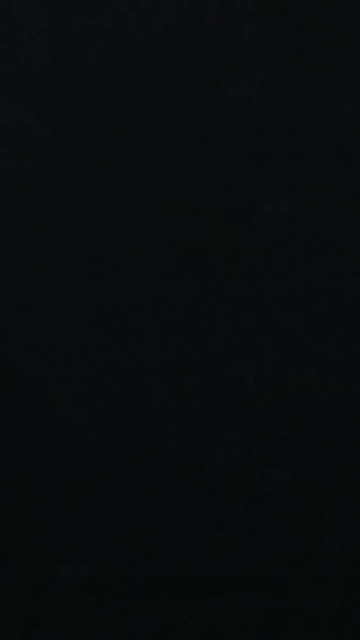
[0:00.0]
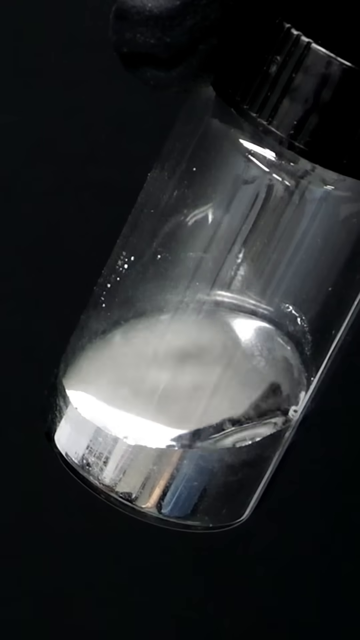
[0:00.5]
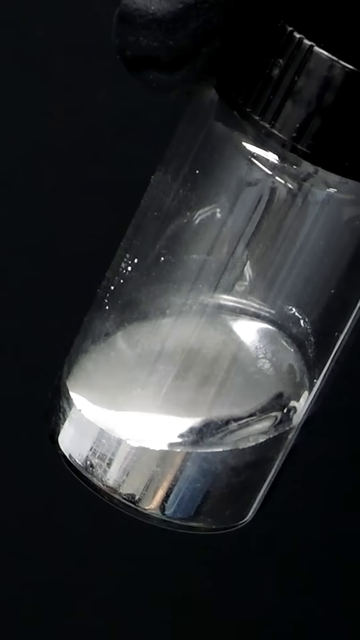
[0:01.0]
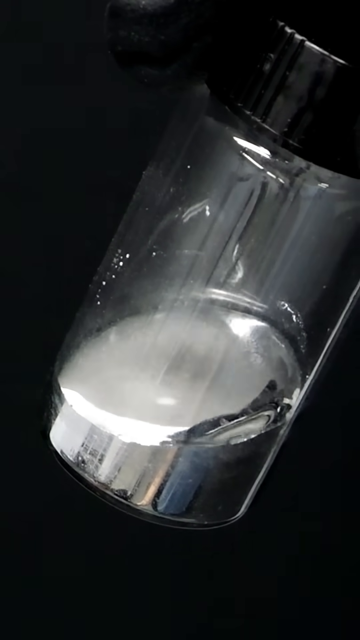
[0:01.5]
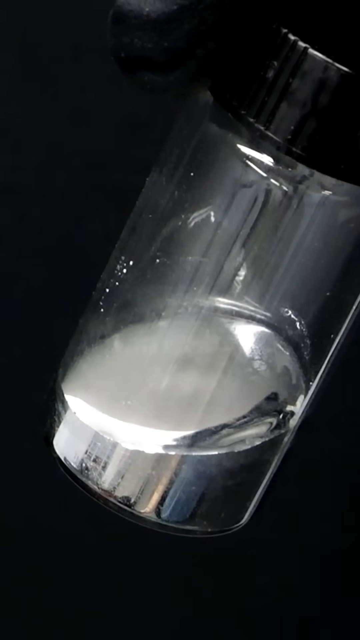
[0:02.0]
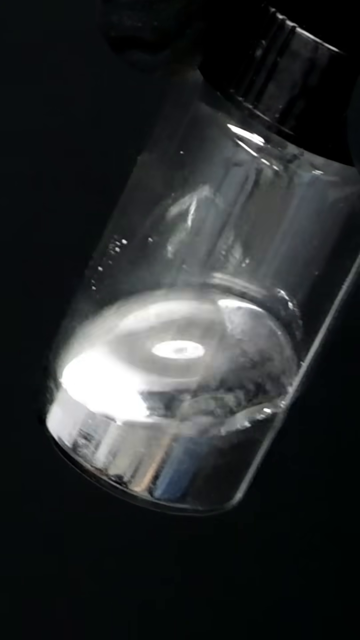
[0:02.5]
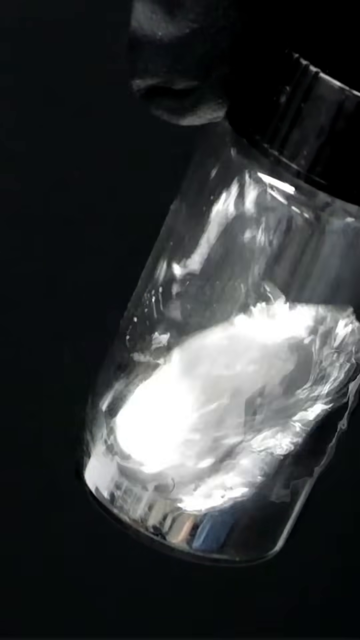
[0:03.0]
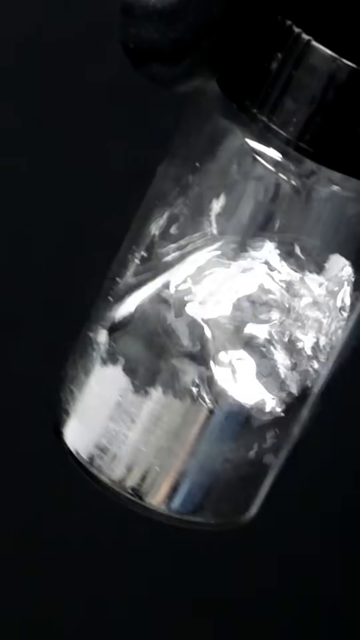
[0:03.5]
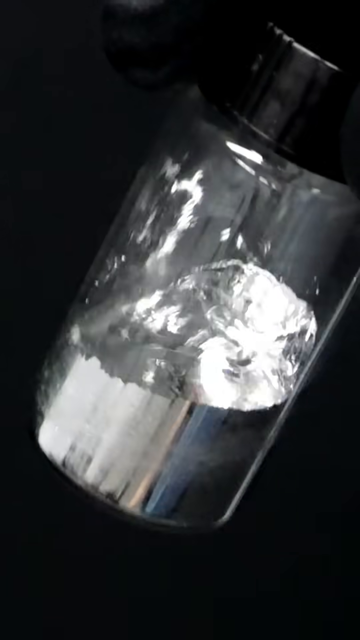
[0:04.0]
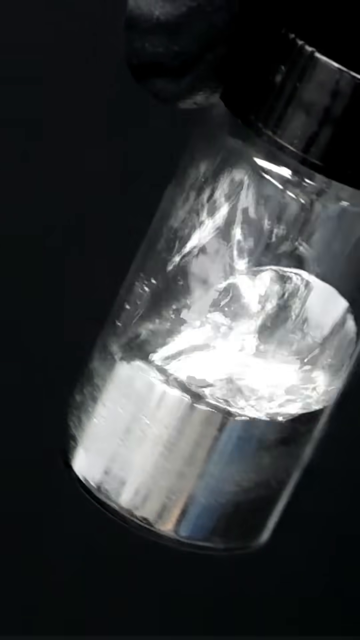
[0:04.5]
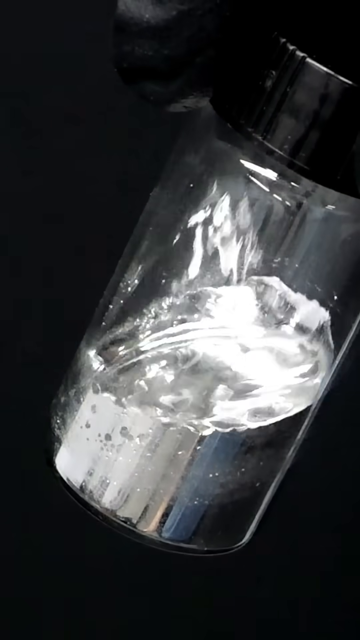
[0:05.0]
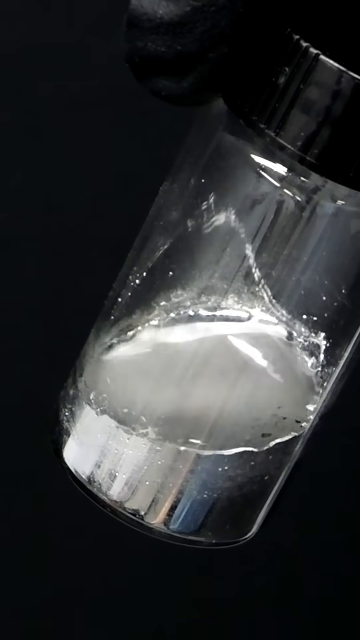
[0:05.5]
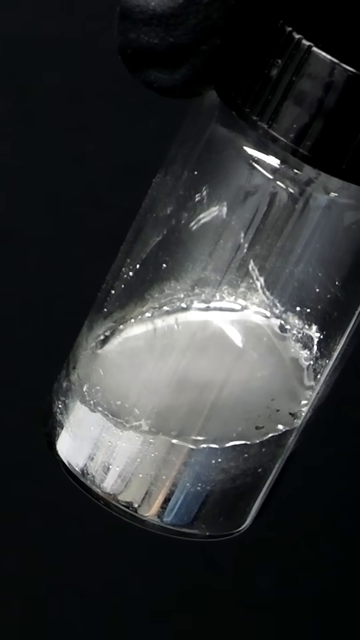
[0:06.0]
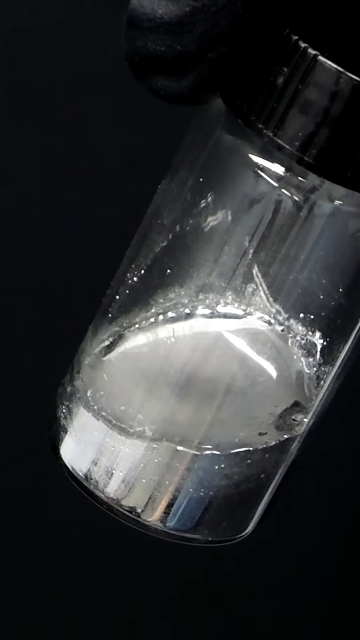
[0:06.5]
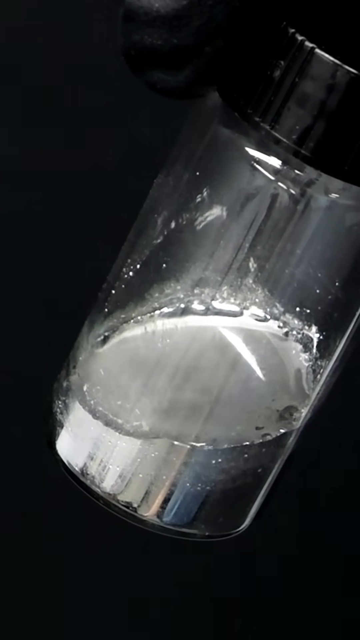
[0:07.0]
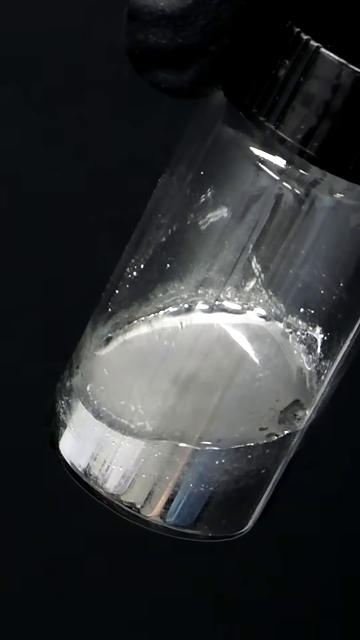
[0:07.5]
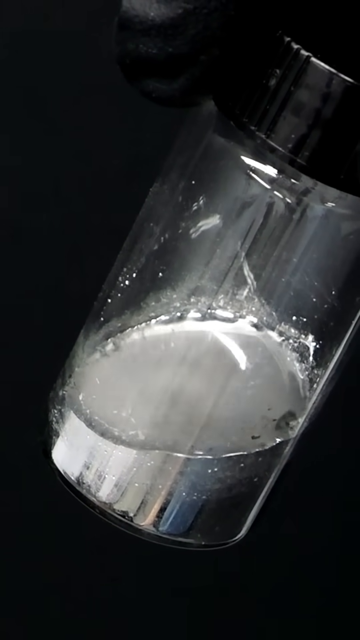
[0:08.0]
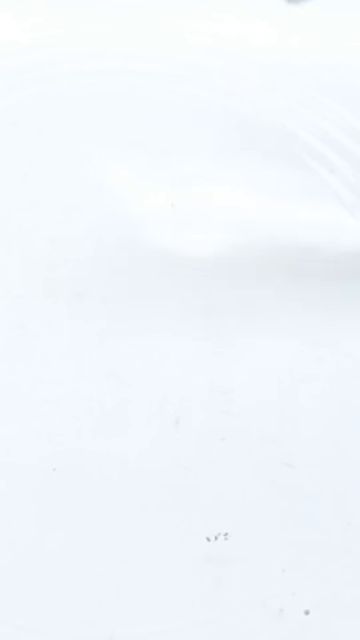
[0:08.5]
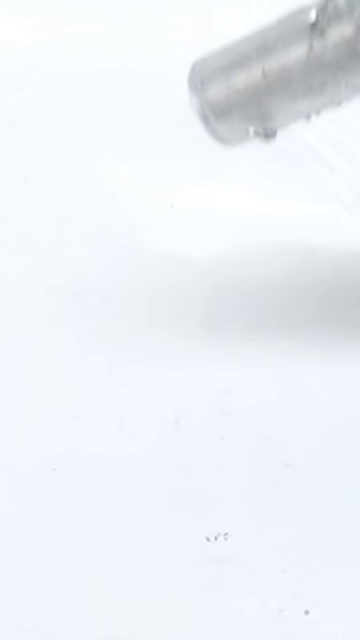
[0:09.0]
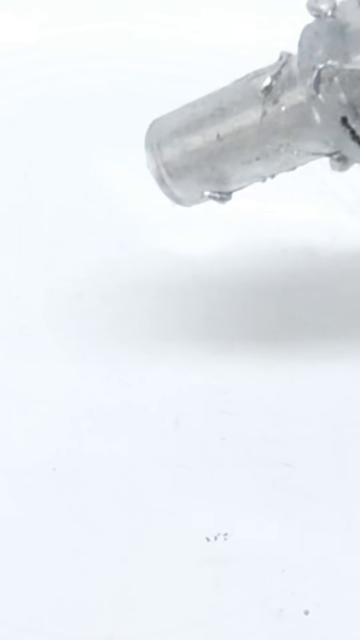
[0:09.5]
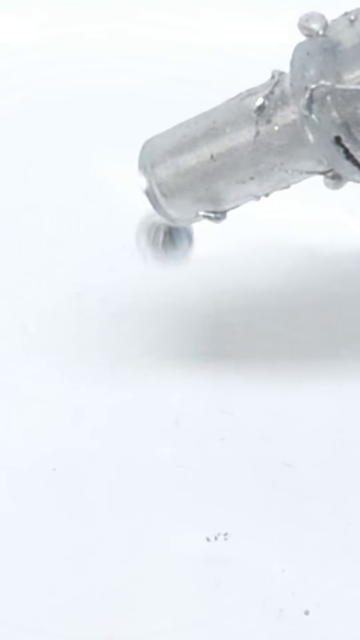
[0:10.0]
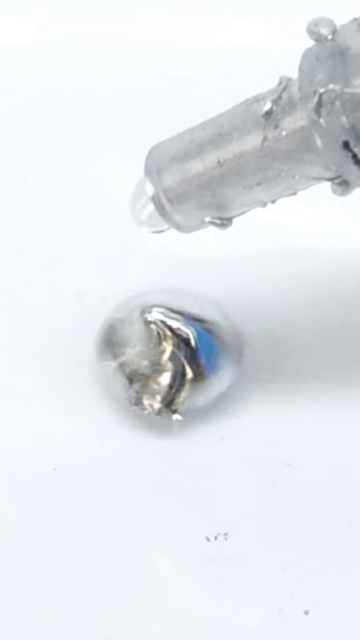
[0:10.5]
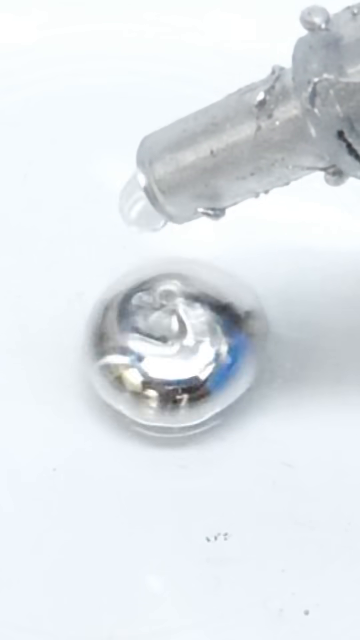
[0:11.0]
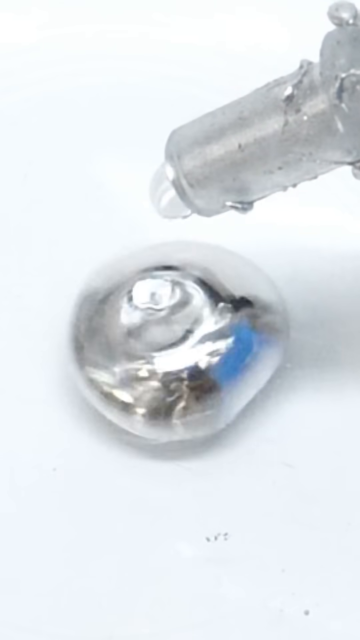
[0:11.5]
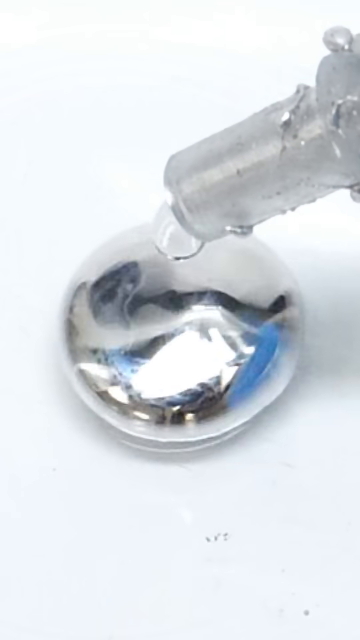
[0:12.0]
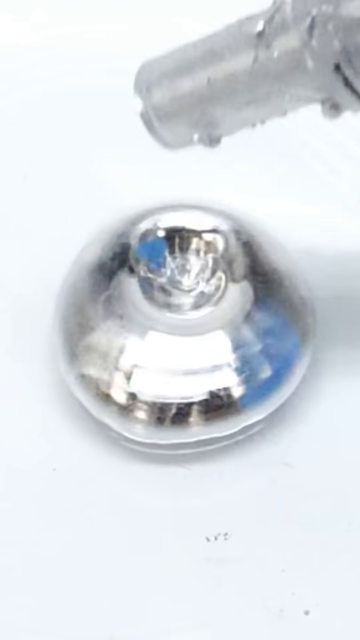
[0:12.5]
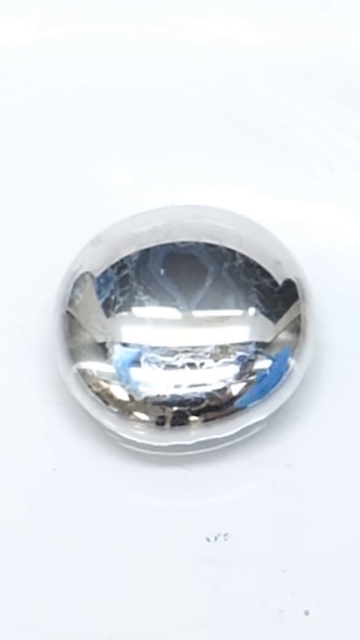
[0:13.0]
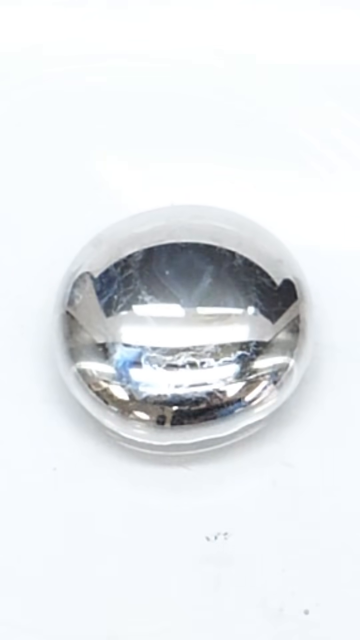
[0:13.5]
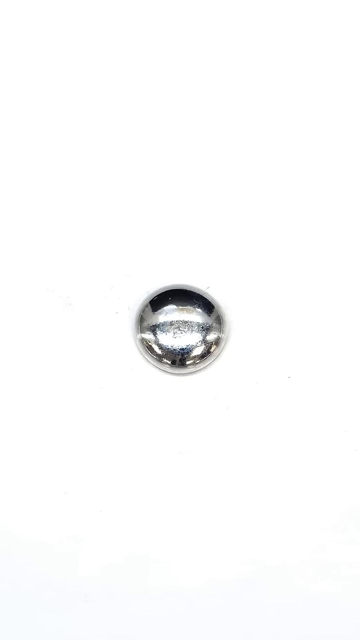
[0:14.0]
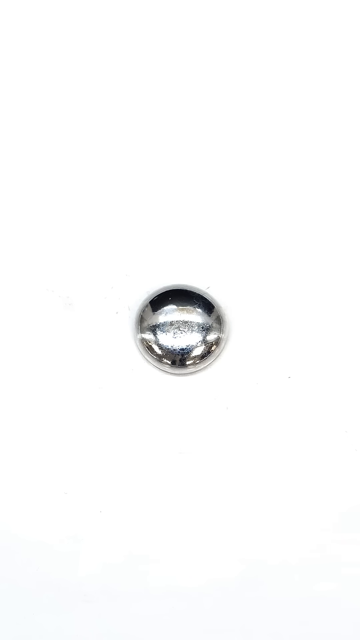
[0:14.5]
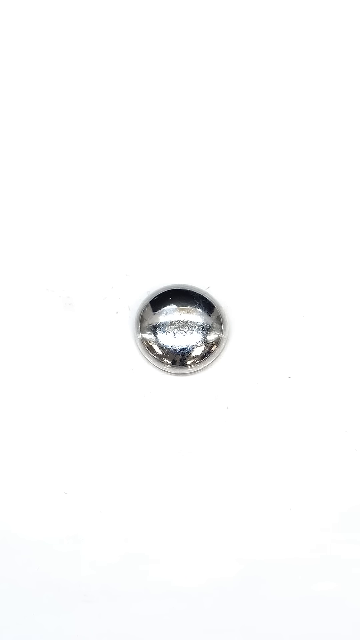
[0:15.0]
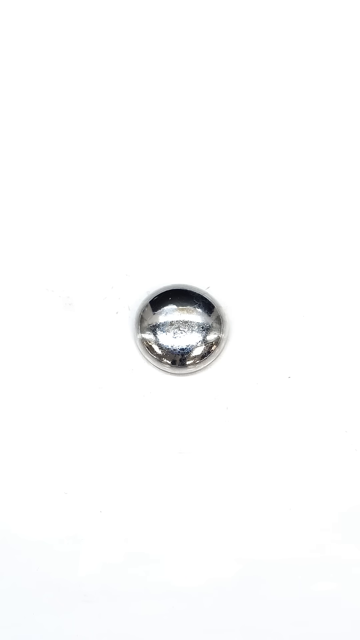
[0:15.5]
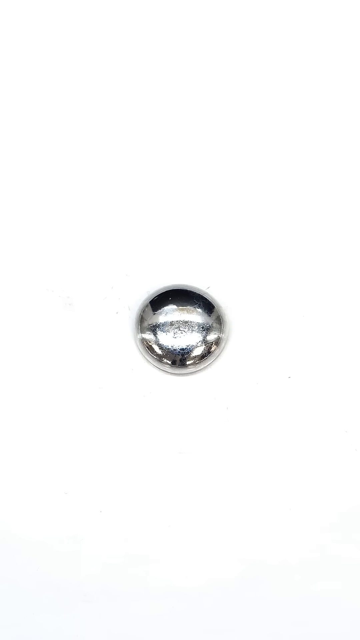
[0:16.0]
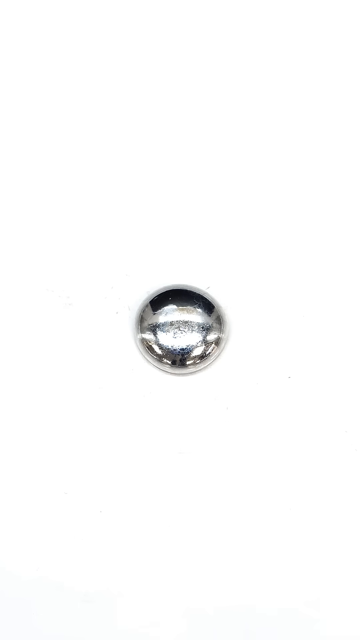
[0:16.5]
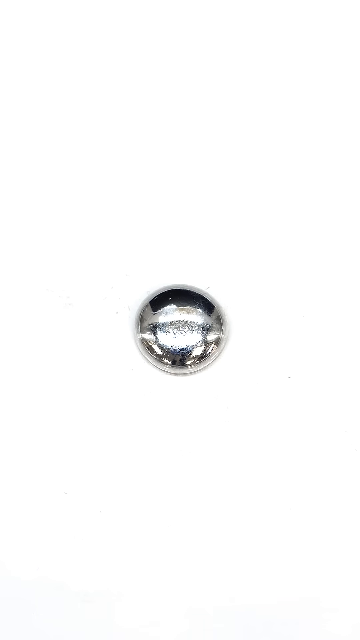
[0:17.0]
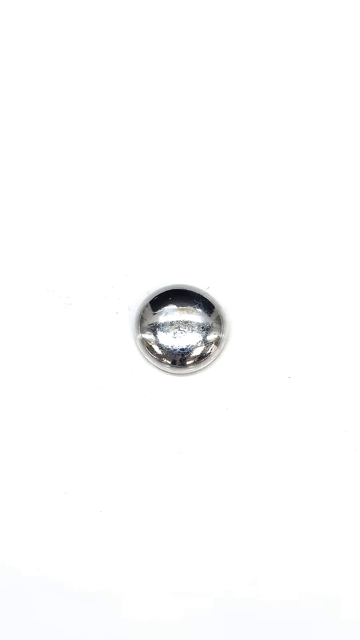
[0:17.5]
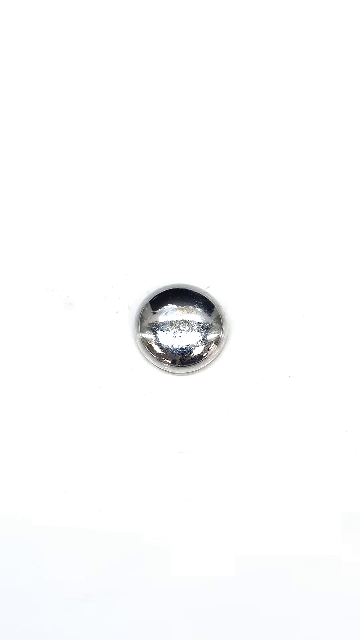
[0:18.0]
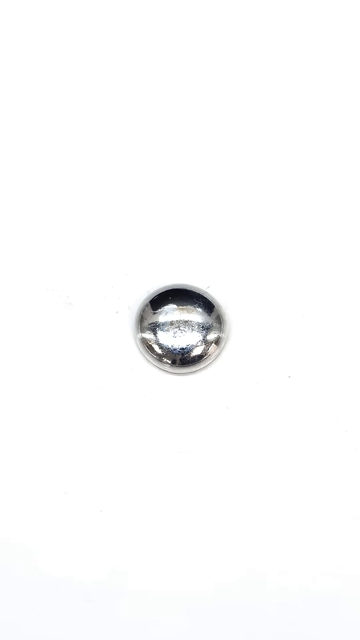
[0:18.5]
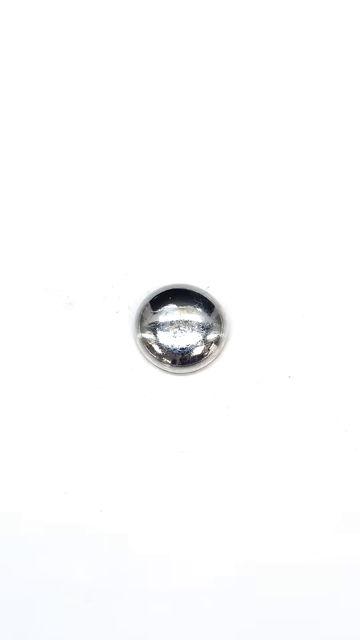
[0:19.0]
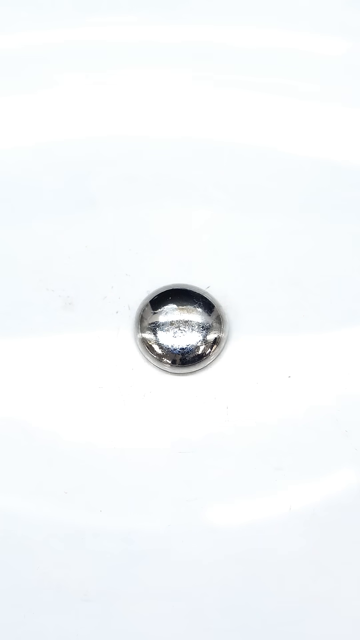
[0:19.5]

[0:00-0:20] Mercury is first shown inside a small flask. Then a drop of mercury is placed on a white surface. There is one flask of mercury and one drop of mercury; no person can be seen. The setting appears to be indoors, though it is unclear whether it is a home or some sort of institutional setting. There are few other details.